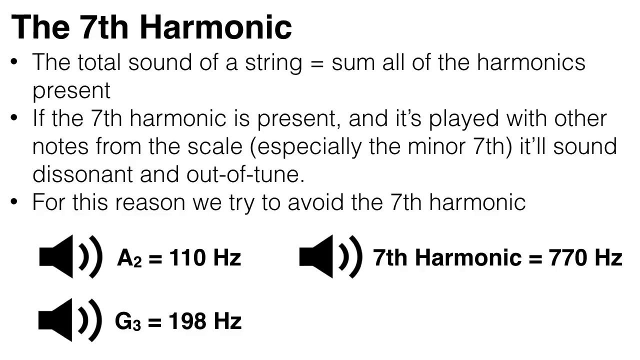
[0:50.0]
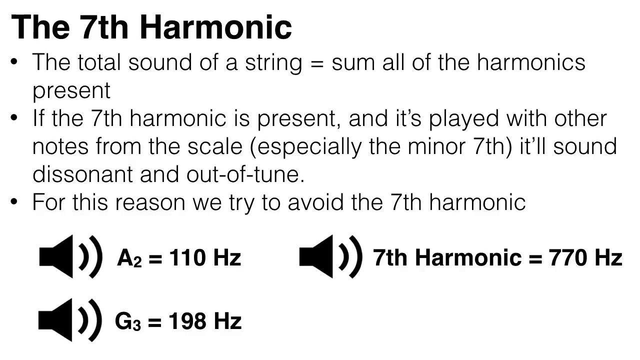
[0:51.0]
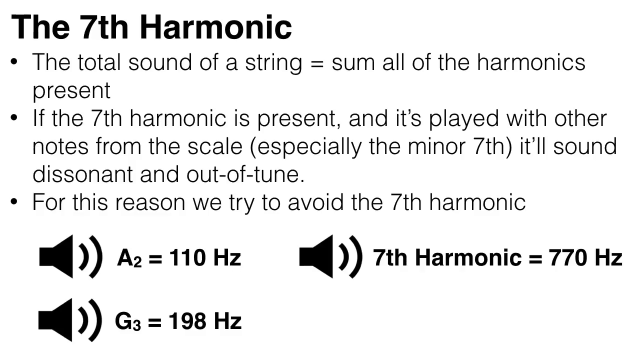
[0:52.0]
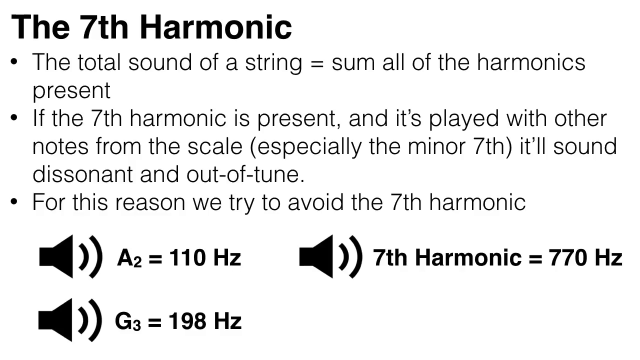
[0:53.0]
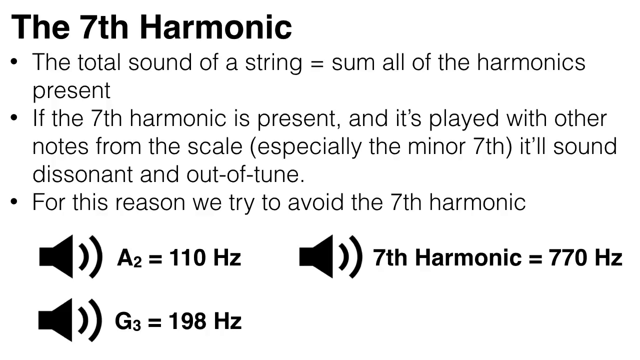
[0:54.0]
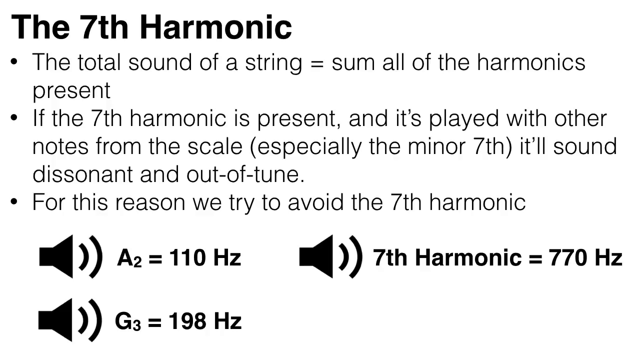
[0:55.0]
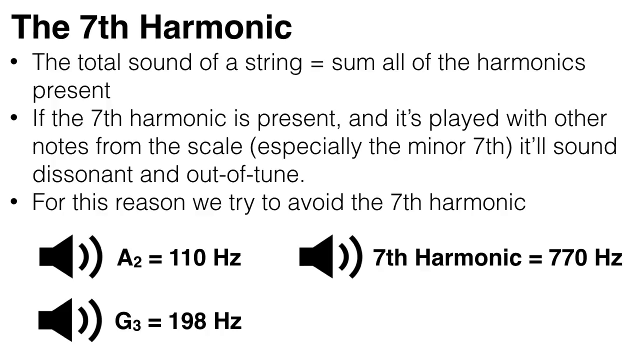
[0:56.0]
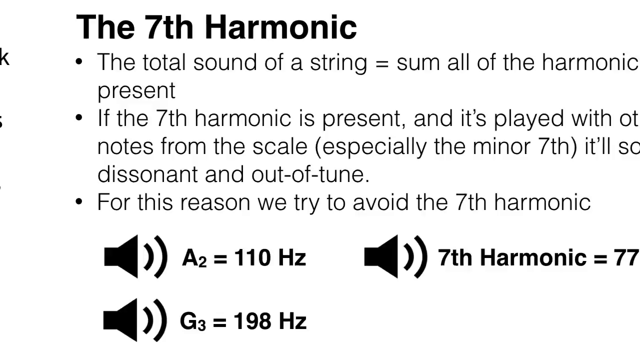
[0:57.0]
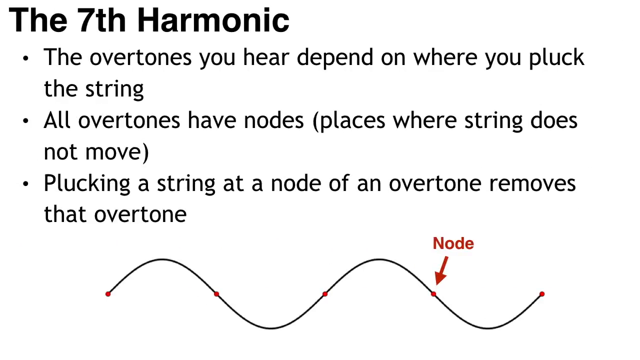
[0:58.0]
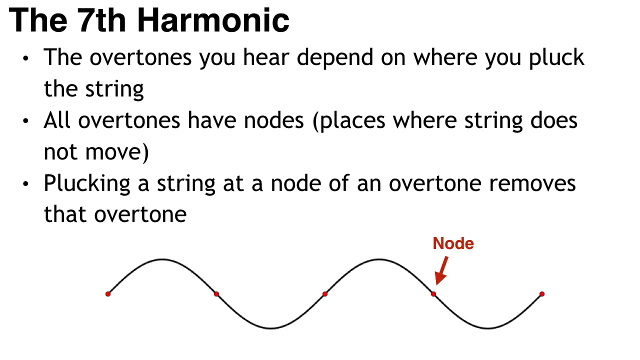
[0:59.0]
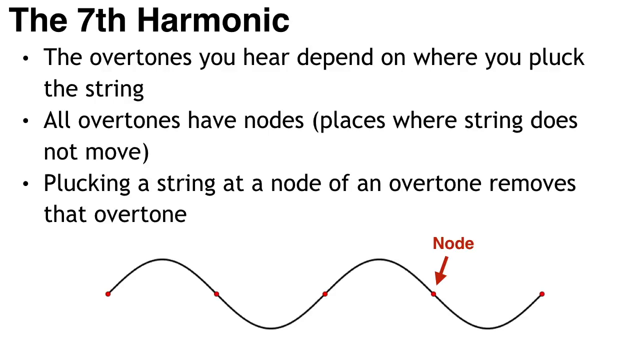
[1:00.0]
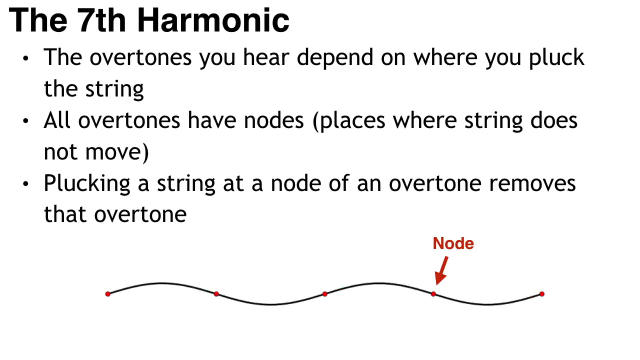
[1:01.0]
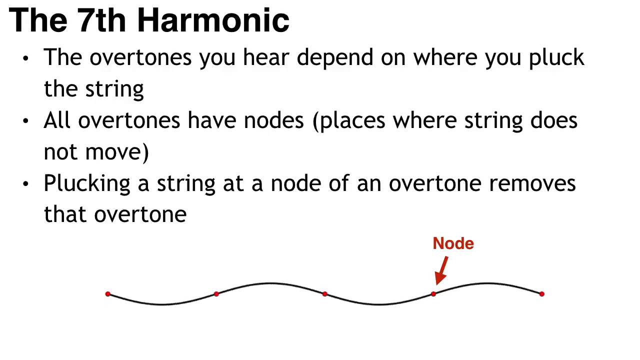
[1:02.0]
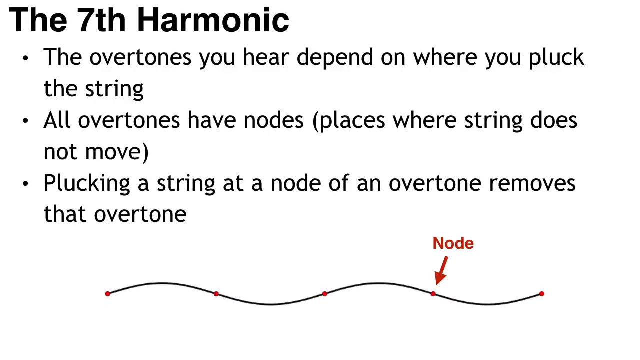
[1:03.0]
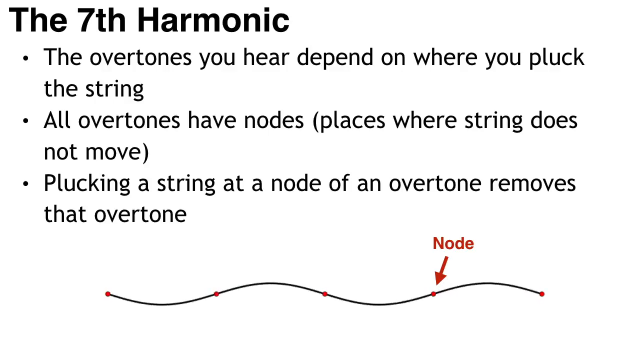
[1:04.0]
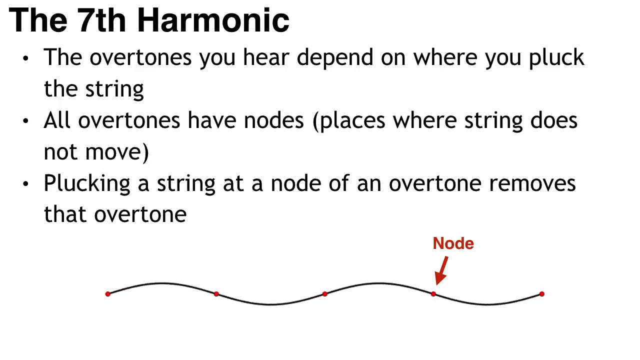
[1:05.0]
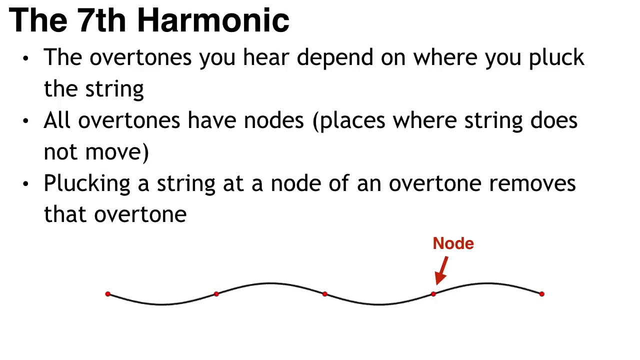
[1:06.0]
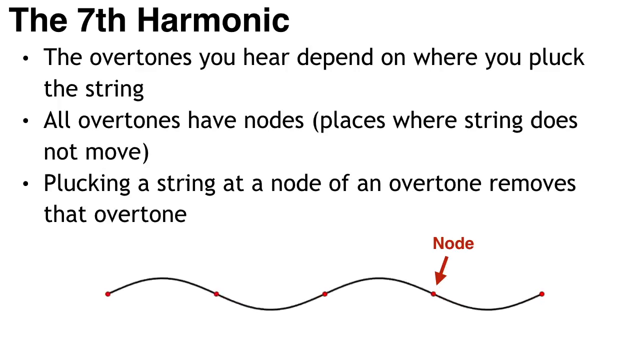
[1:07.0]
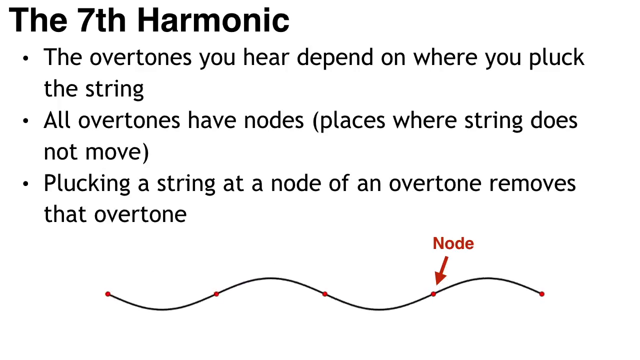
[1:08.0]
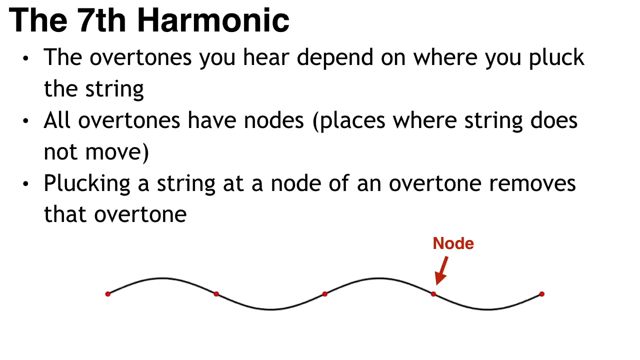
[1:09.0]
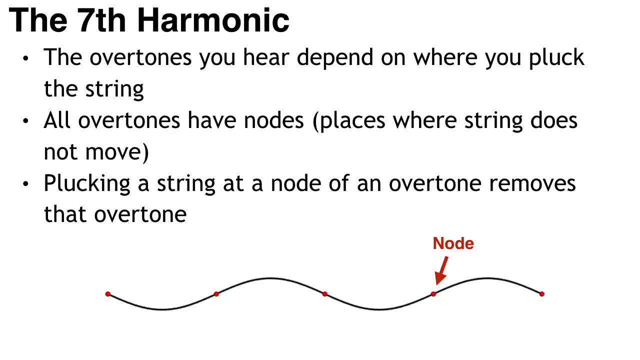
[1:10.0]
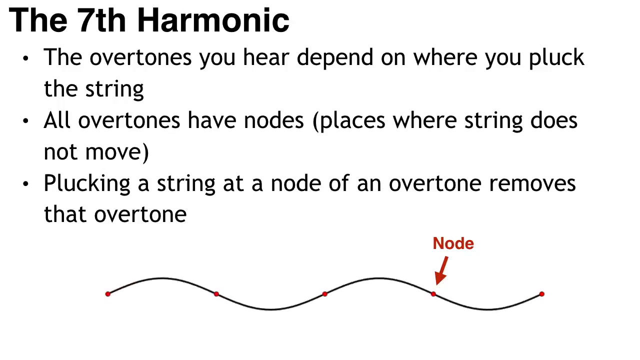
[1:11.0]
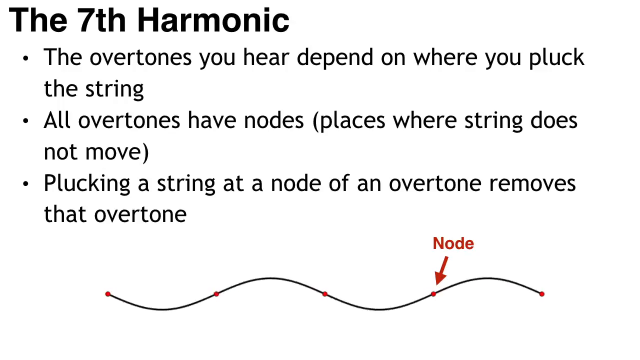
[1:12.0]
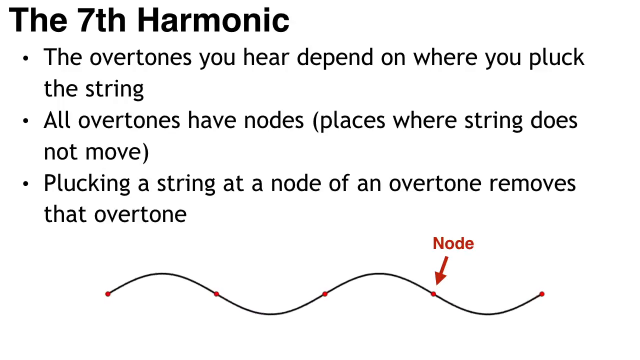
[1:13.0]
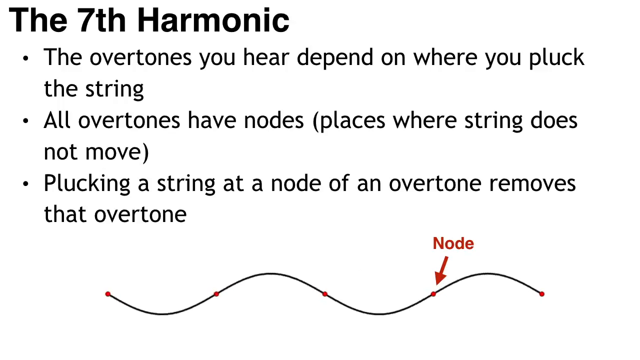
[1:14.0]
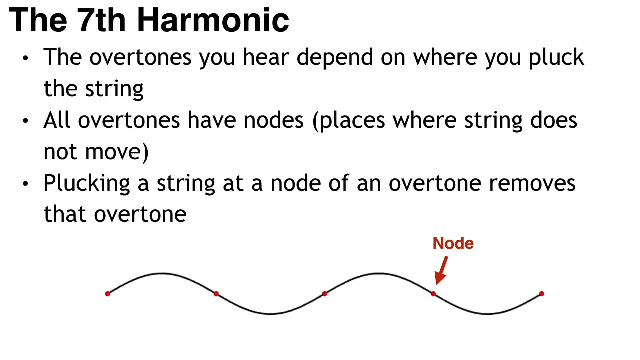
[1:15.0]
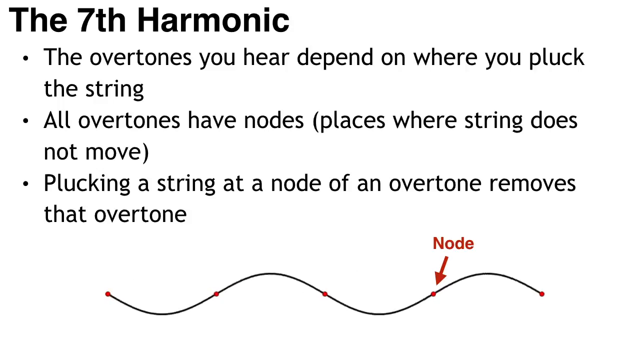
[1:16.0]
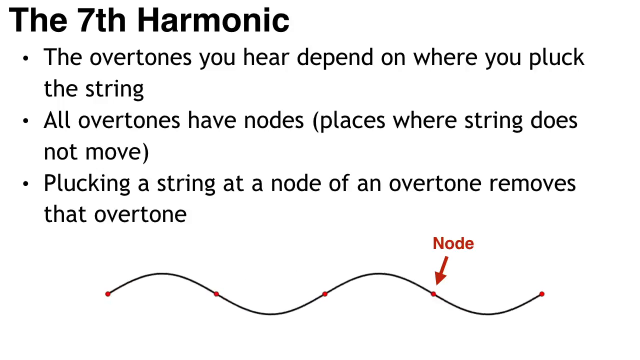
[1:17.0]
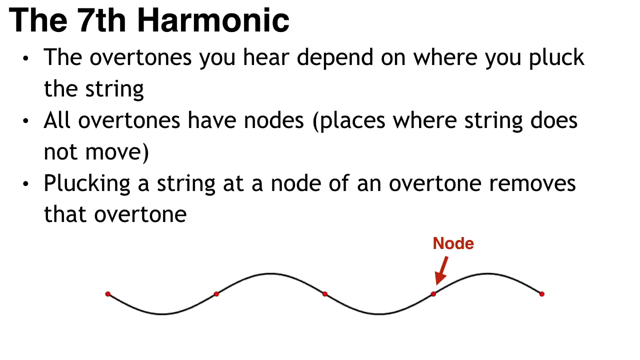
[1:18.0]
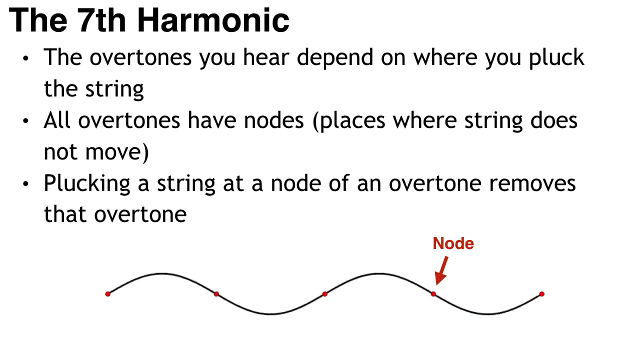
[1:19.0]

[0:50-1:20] A music slide titled "the seventh harmonic" has three bullets: "the total sound of a string equals the sum of all the harmonics present," "if the seventh harmonic is present and it's played with other notes from the scale, especially the minor seventh, it'll sound dissonant and out of tune," and "for this reason we try to avoid the seventh harmonic." Below are hertz designations: a sound symbol, then "A2 = 110 hertz," "seventh harmonic = 770 hertz," and "G3 = 198 hertz." Next, three new bullets appear: "the overtones you hear depend on where you pluck the string," "all overtones have nodes, places where string does not move," and "plucking a string at a node of an overtone removes that overtone." A wave pattern with the nodes marked is then shown.